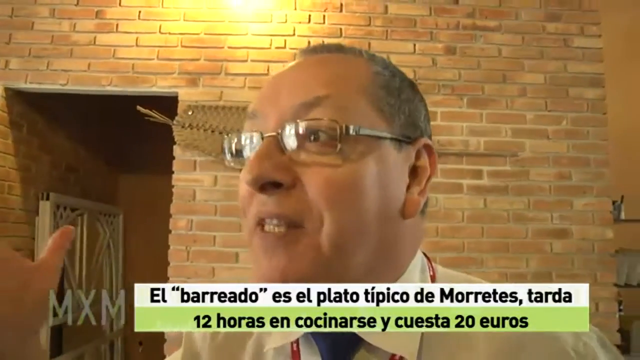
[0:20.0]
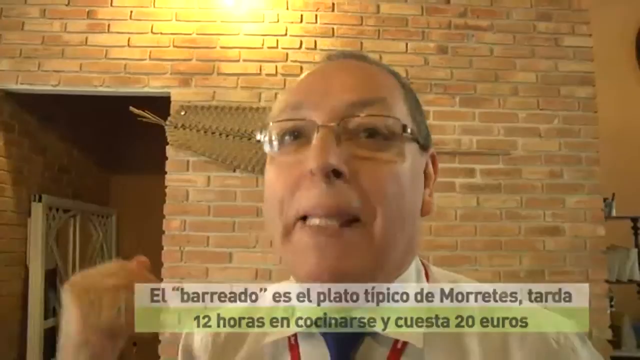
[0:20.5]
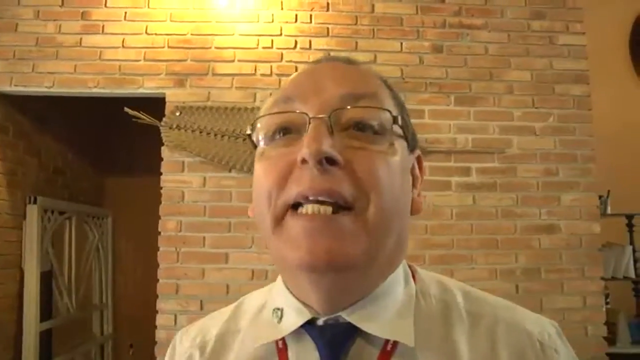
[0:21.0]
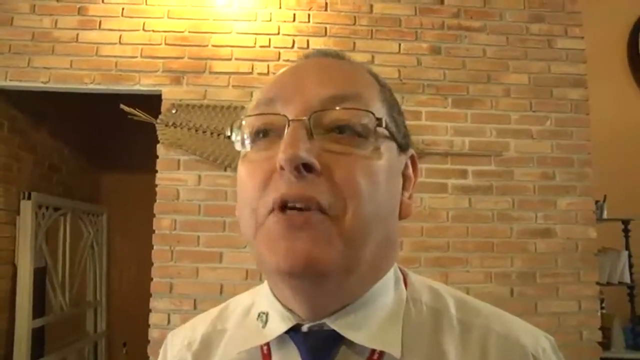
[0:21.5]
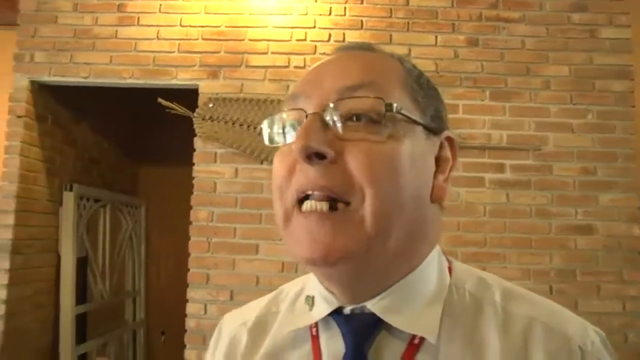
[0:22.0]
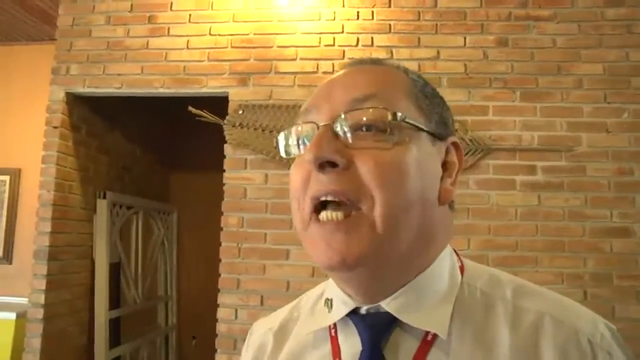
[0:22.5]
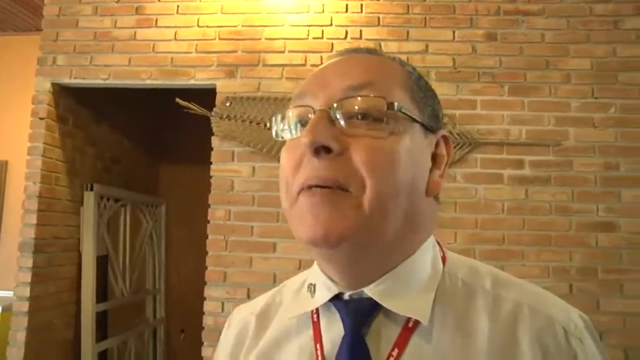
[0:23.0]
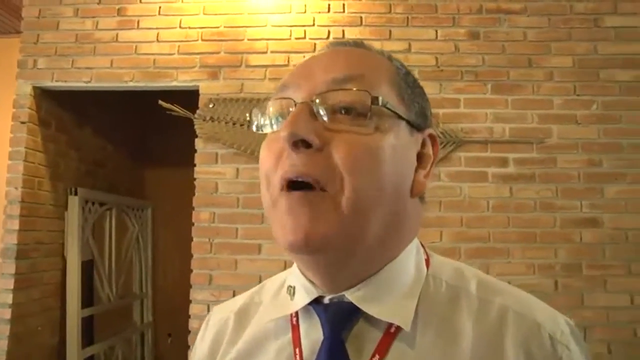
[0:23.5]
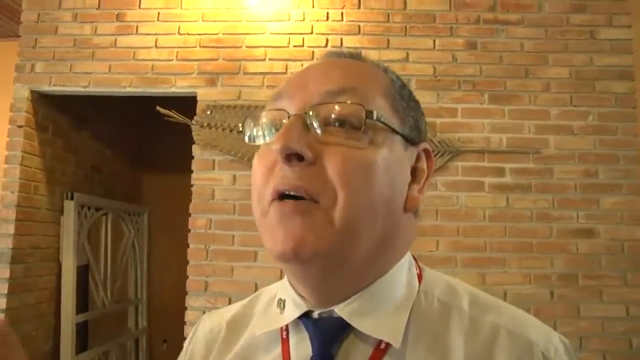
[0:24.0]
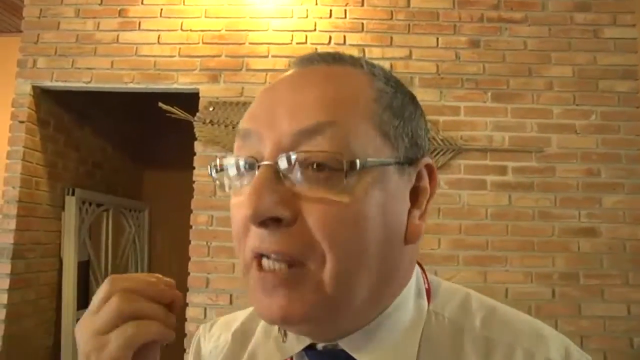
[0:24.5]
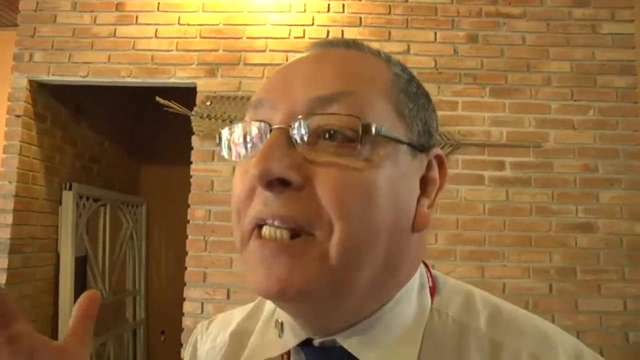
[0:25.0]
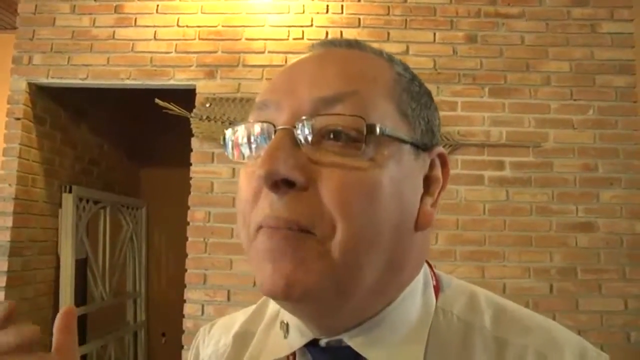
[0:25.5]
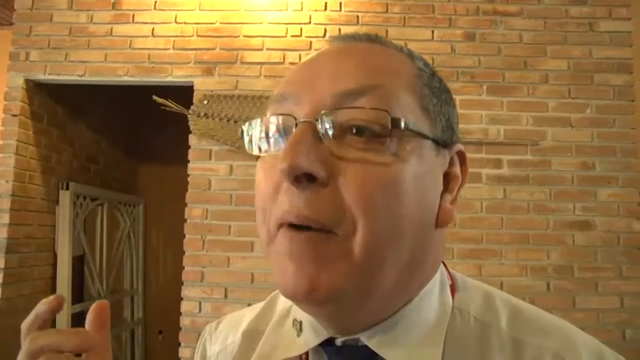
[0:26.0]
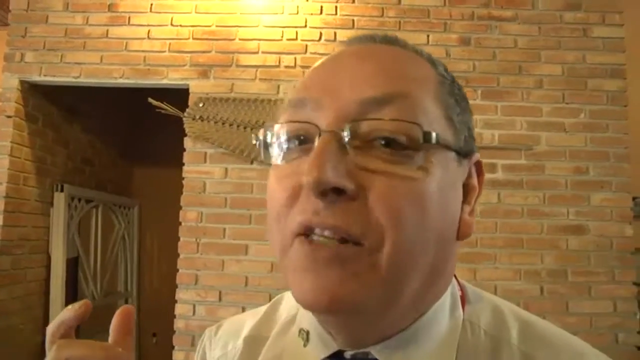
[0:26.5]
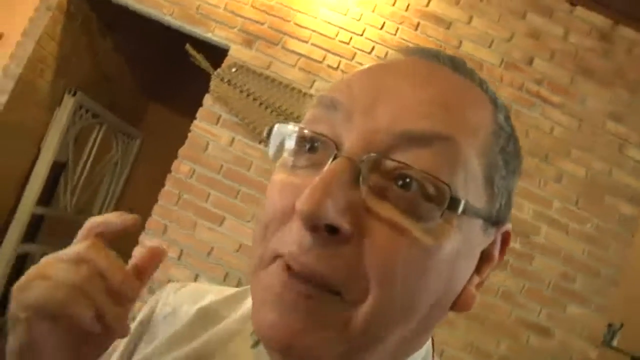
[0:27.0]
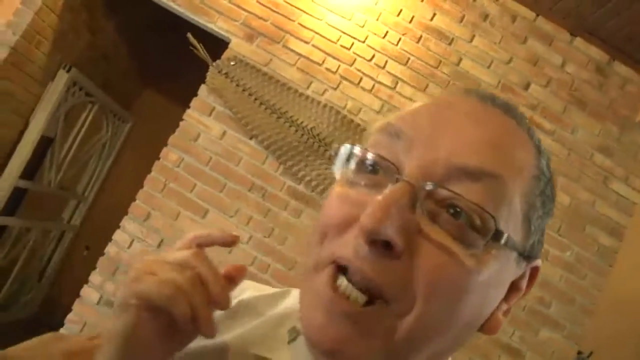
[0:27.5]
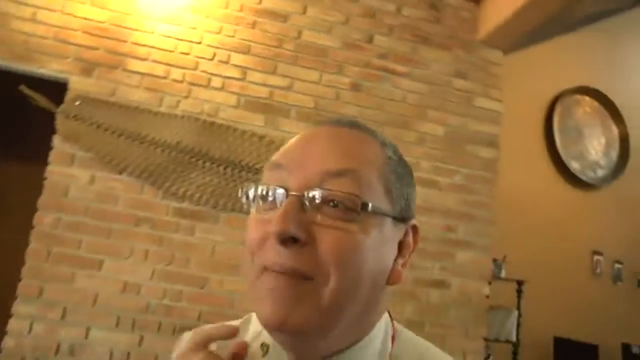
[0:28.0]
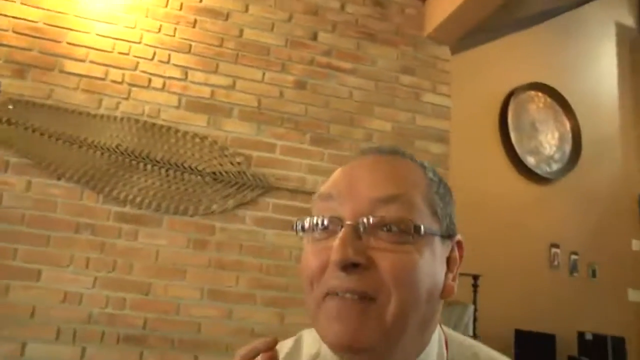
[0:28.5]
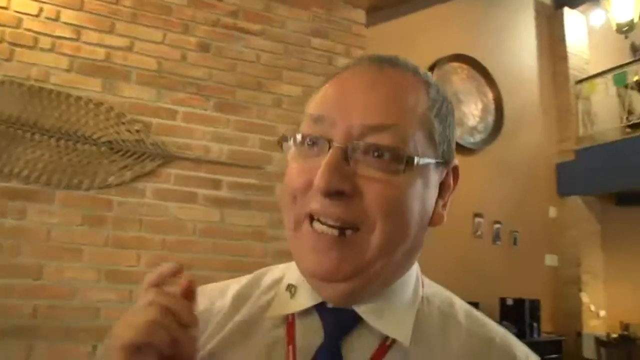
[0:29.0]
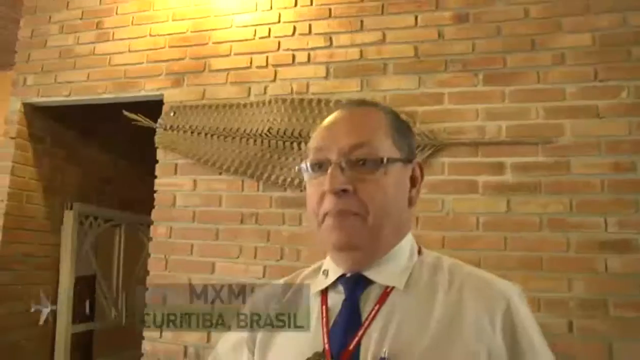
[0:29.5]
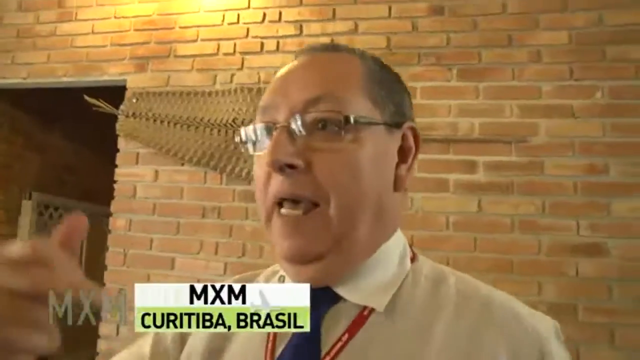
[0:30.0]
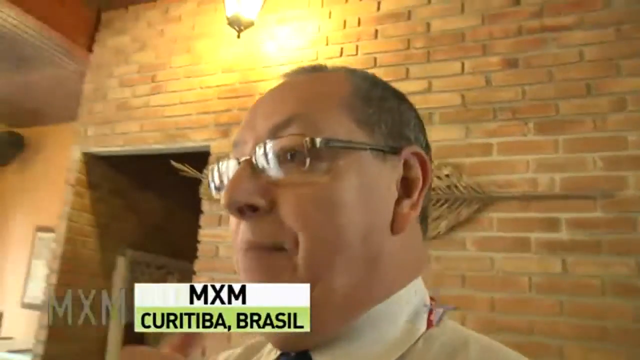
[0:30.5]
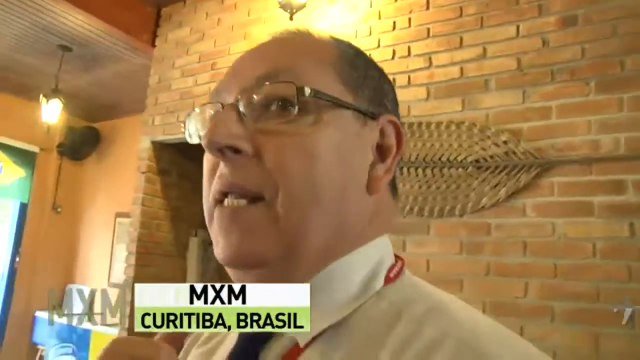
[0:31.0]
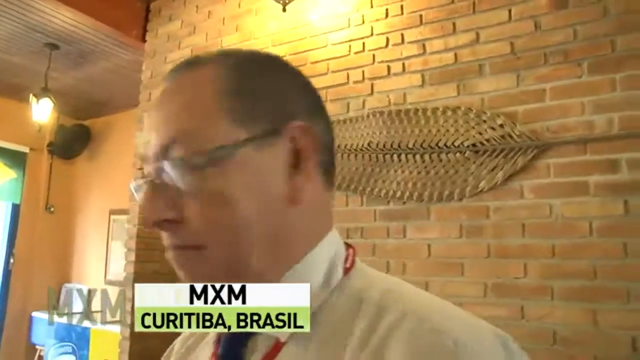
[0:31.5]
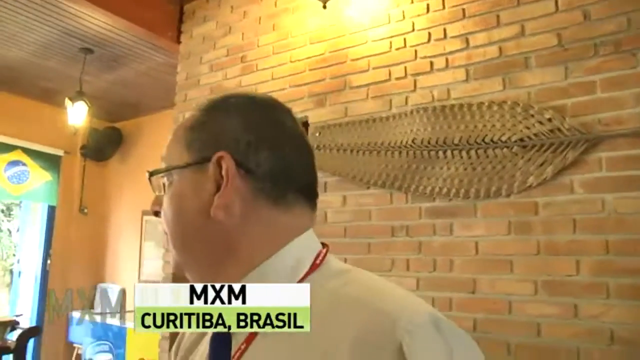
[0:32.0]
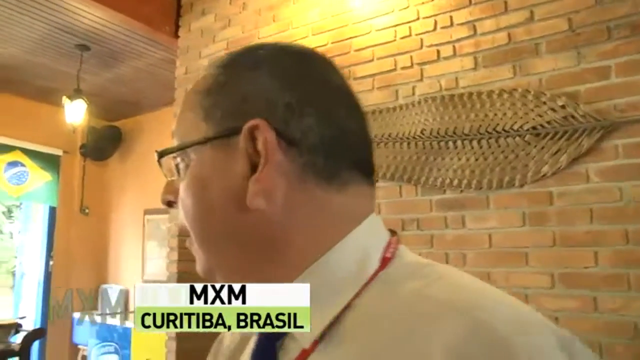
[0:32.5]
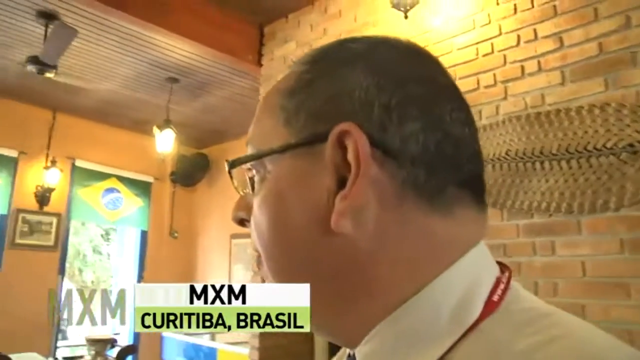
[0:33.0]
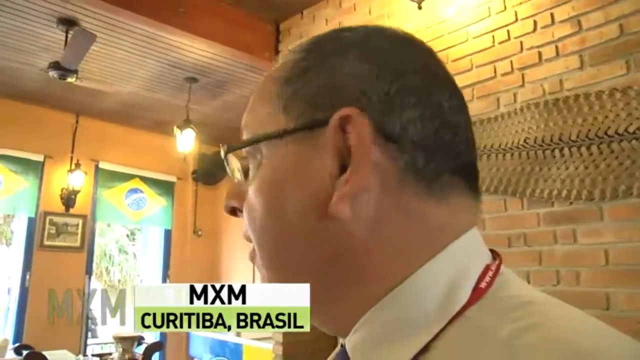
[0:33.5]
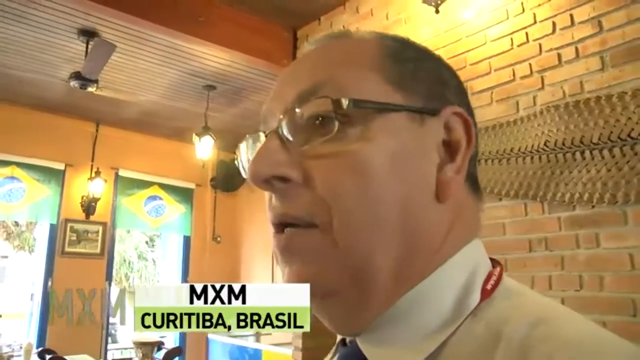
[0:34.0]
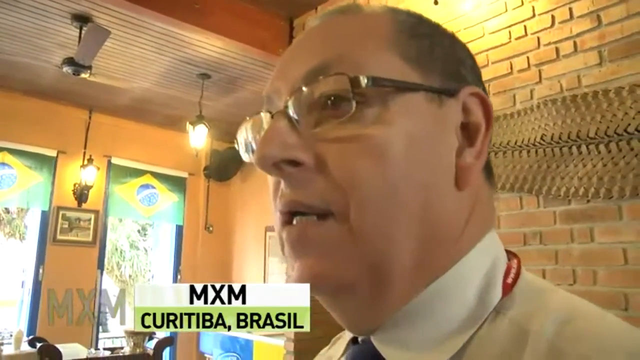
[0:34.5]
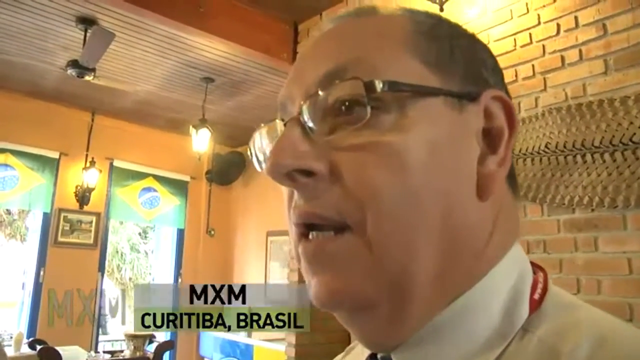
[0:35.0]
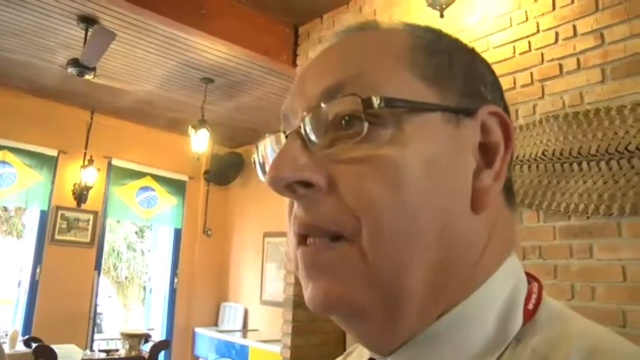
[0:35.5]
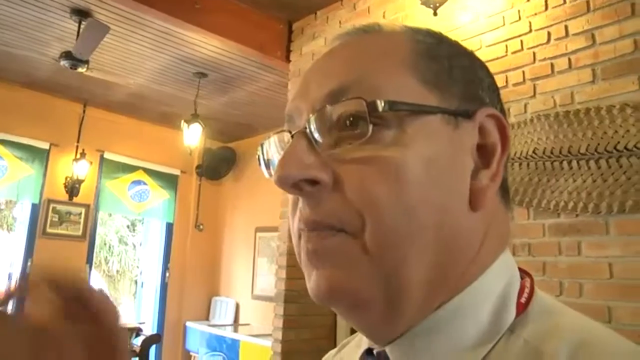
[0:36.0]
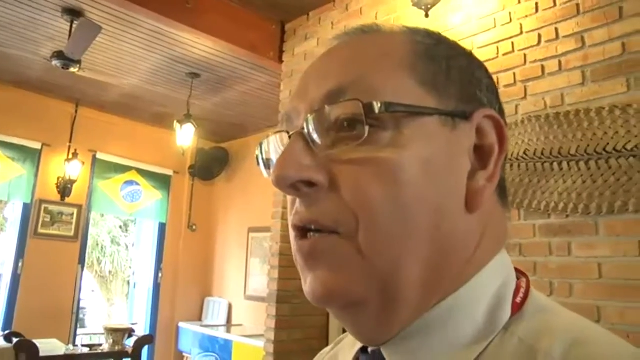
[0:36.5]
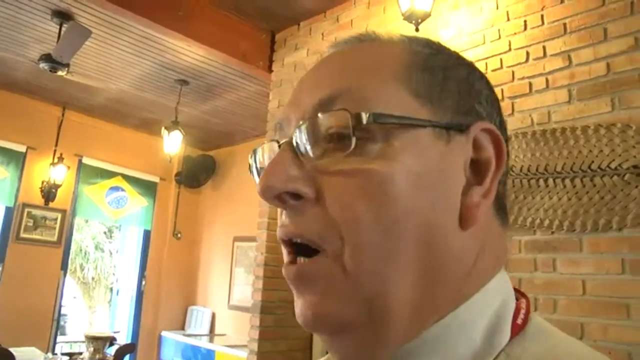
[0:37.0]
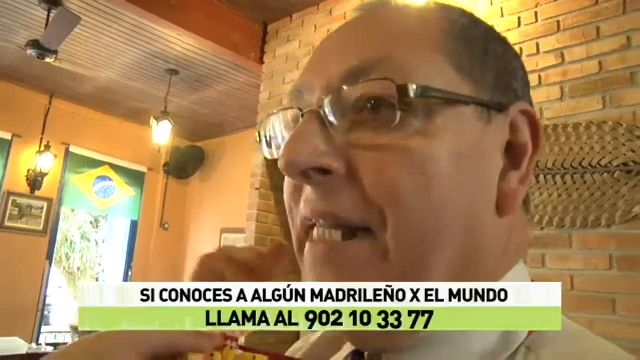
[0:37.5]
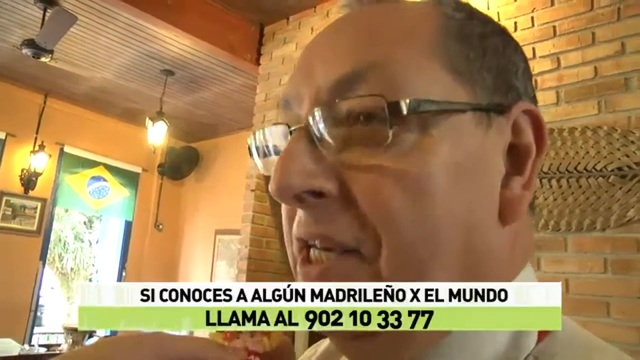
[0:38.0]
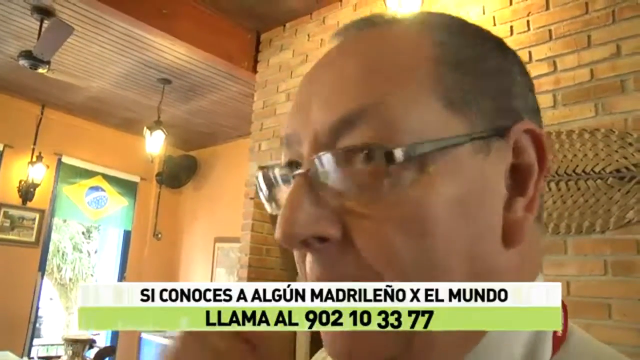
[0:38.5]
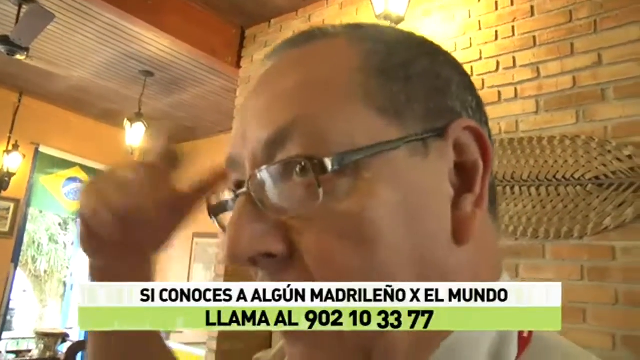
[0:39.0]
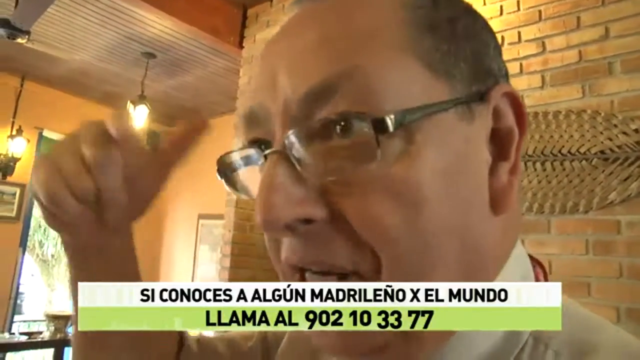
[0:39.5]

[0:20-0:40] Inside the building or restaurant, a man talks with the visitors, who are still getting acquainted.